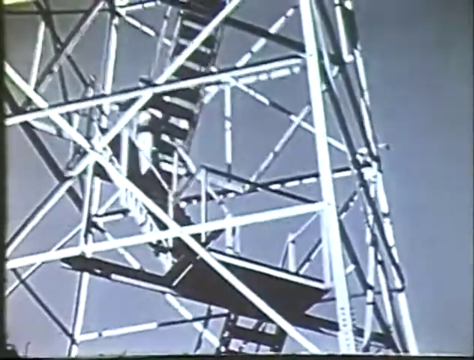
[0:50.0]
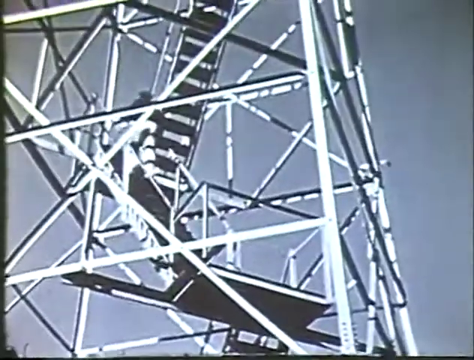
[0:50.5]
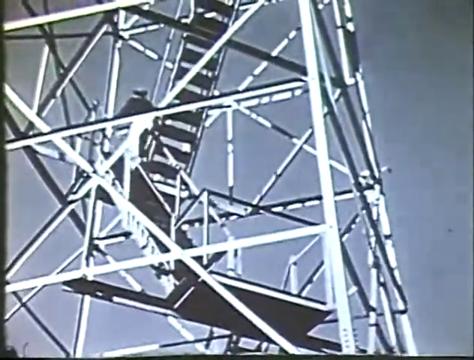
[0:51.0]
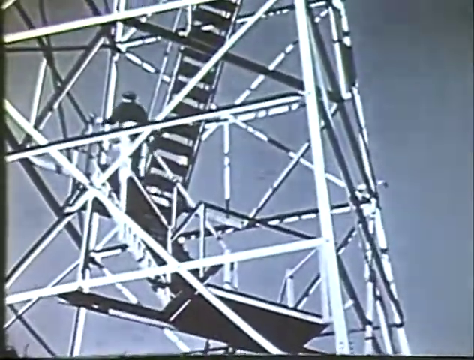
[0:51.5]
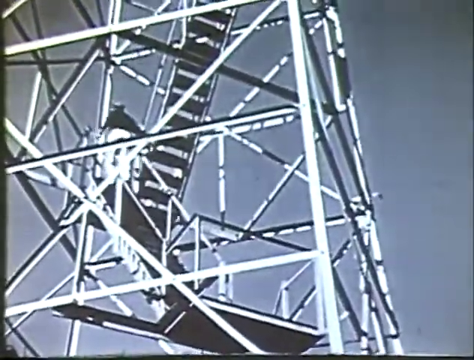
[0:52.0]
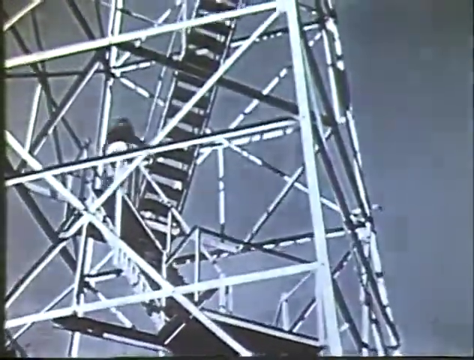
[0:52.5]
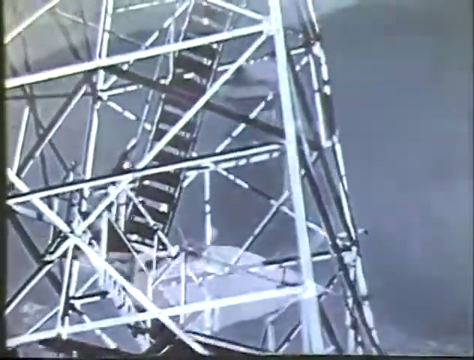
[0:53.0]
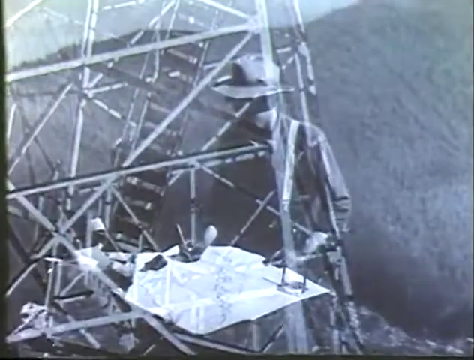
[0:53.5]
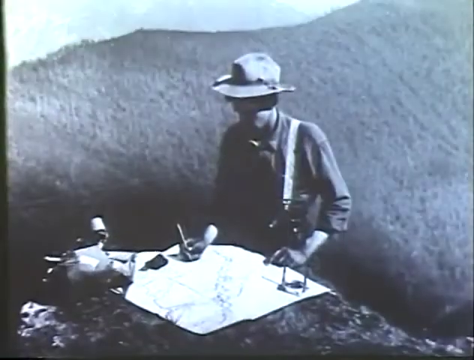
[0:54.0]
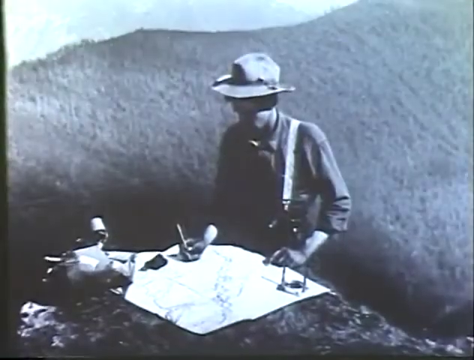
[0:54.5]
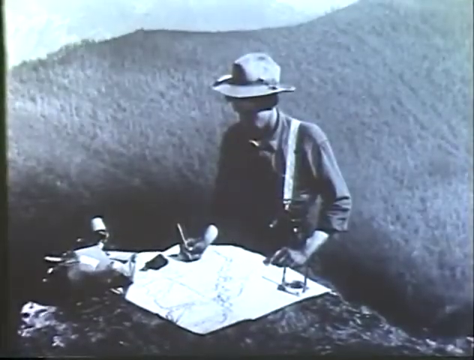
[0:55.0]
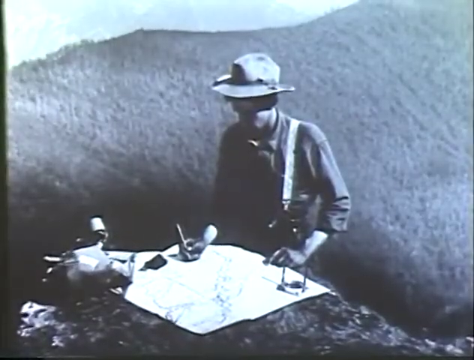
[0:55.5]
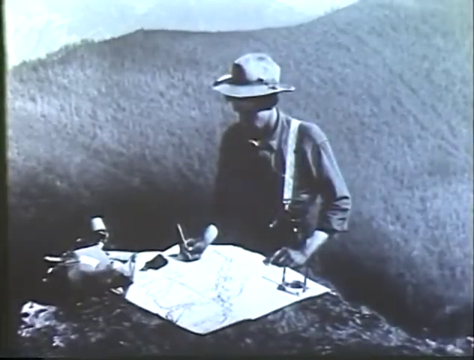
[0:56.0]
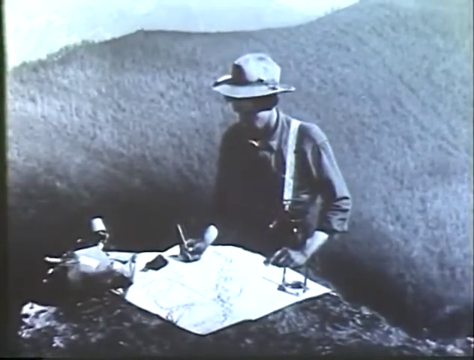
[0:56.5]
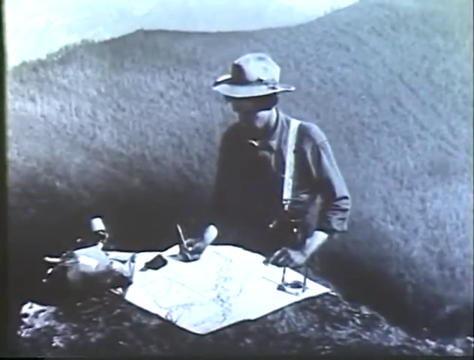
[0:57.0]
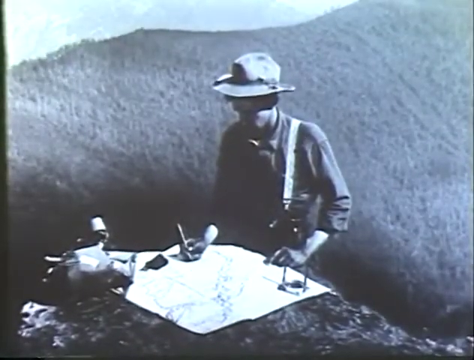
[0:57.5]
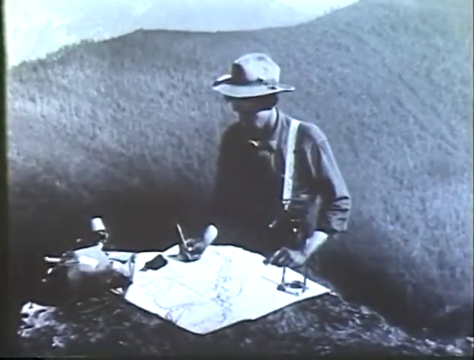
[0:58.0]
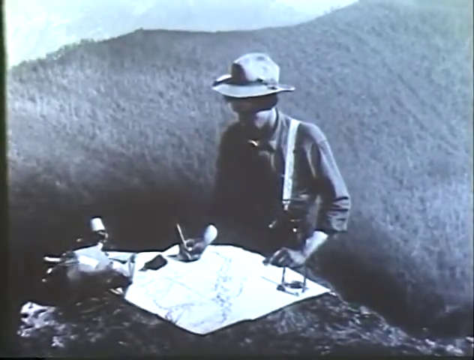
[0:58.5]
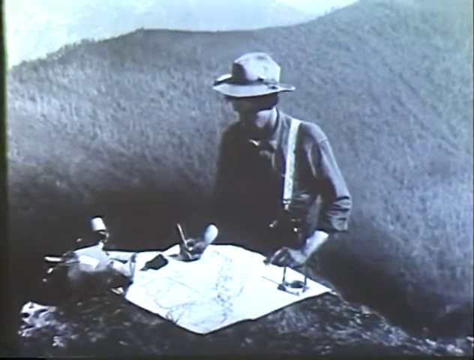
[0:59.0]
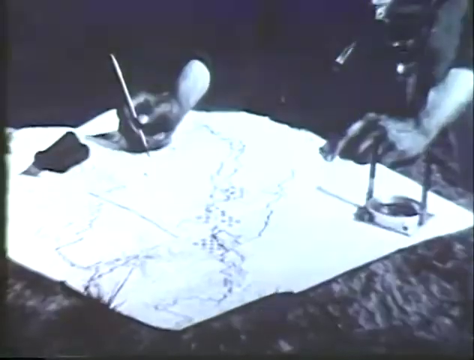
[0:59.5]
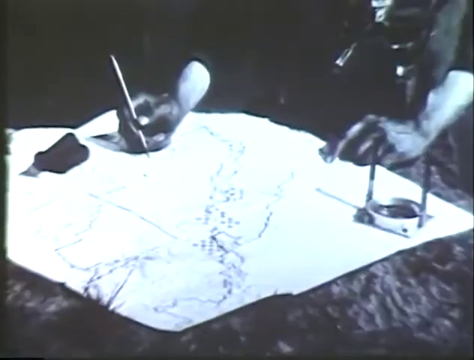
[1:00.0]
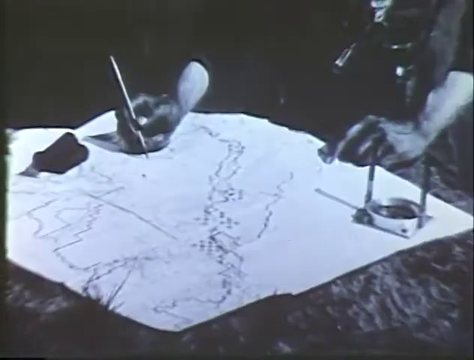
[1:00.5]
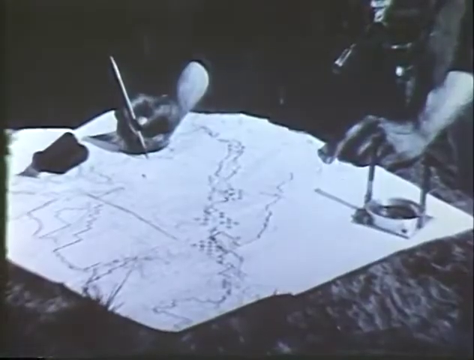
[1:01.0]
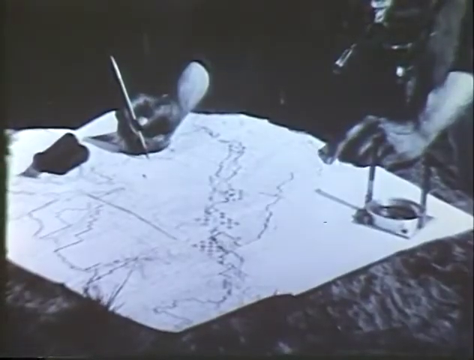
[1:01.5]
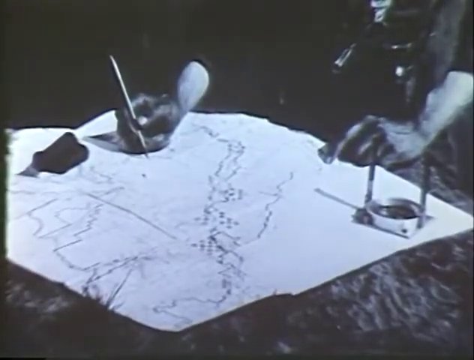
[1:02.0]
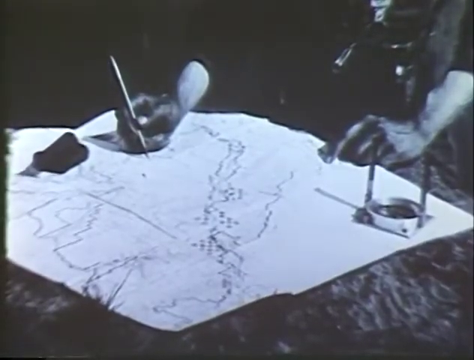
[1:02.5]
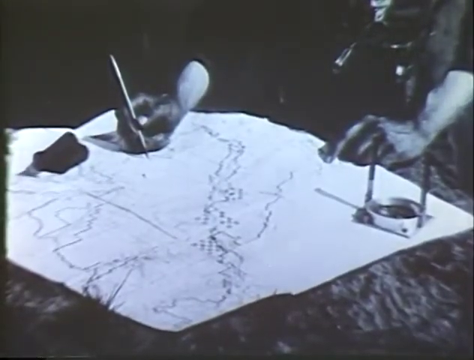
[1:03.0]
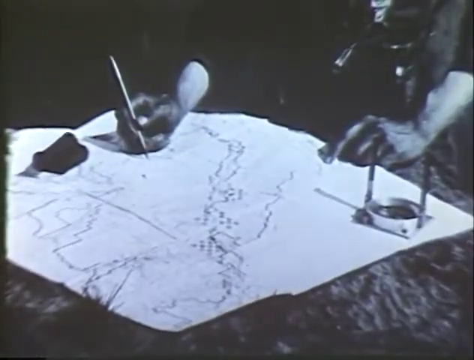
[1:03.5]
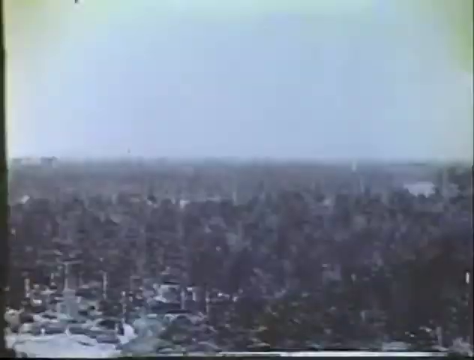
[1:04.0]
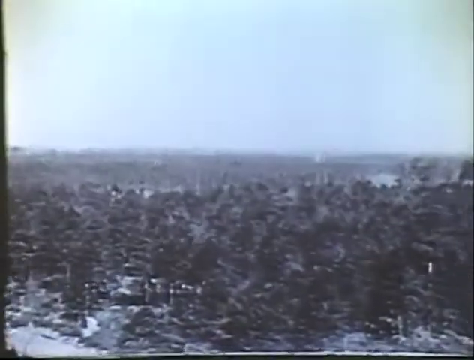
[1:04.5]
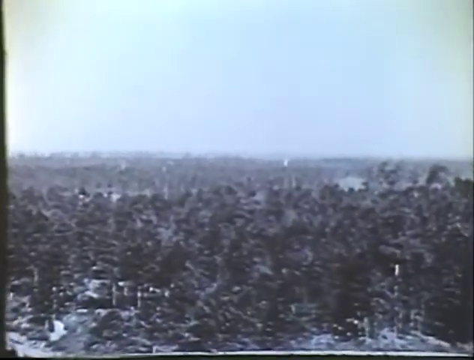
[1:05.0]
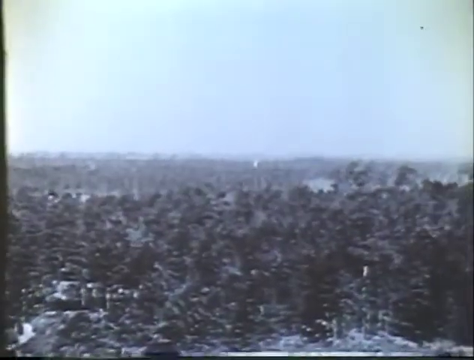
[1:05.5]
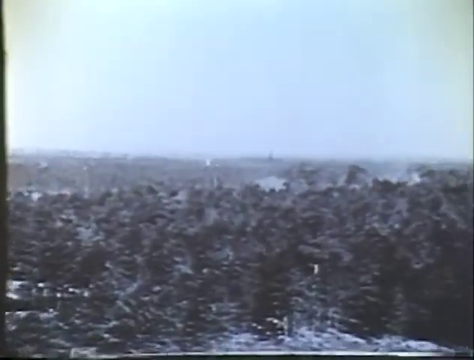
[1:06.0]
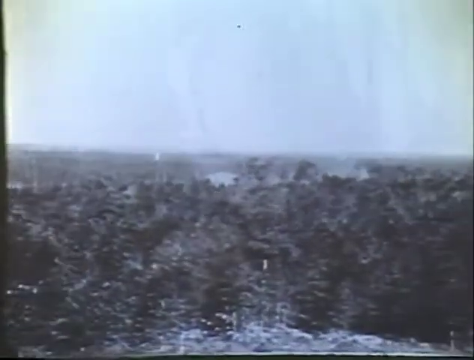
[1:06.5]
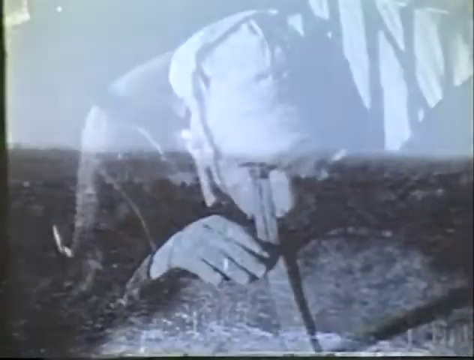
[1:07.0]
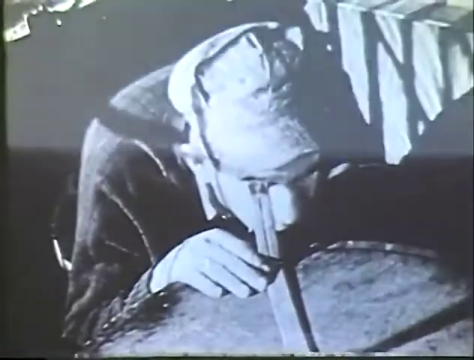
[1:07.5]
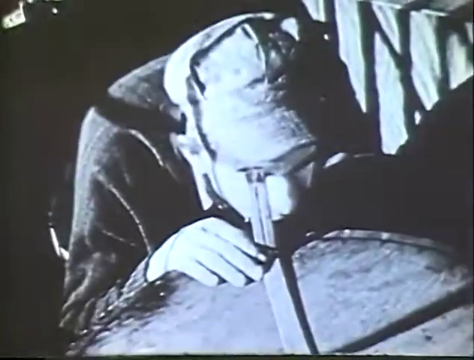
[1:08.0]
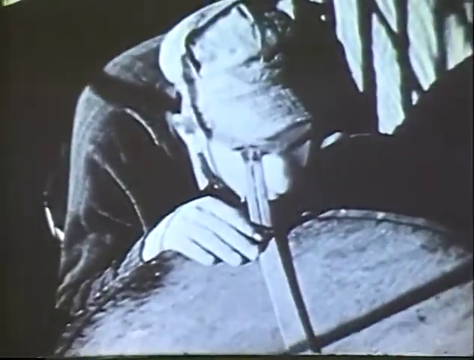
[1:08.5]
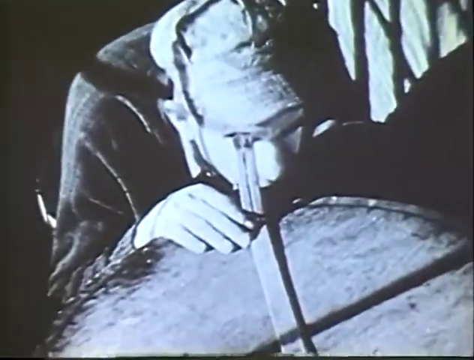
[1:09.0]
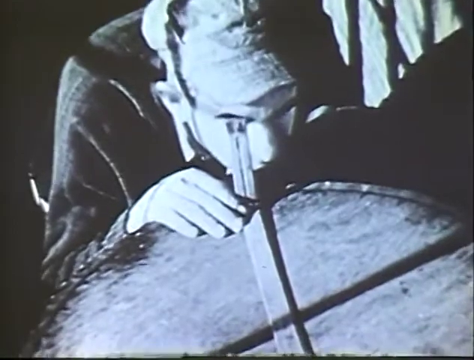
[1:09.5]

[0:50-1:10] In black and white, the intricate metal grid of a fire tower is shown, with a fairly steep staircase rising through its center and railings on both sides. A figure climbs up the staircase from a platform below and turns to the right. The image fades into a man standing in the foreground with a range of mountains behind him; everything is heavily wooded and looks undeveloped. He is standing in front of a large rock, over which he has opened a white map of some sort. He holds a pencil in his right hand, and to his left an instrument is on top of the map; his left hand rests on its edge by the rock. He wears a hat, a long-sleeved dark shirt and lighter colored suspenders, and looks down at the map as he works. A close-up shows the map, which looks to be of the mountain range where he is standing, with a dark object next to his right hand, still holding the pencil. The camera then pans to a view over the valley taken from high, with tree-covered mountains in the distance. The image then turns to a man with a cap peering through some sort of telescope.